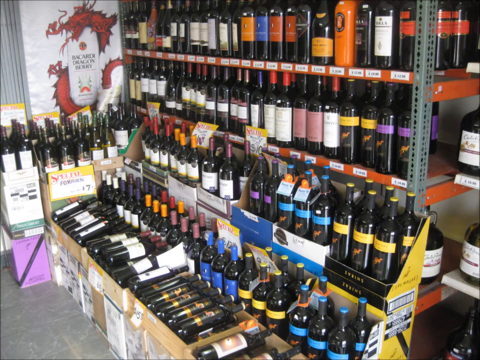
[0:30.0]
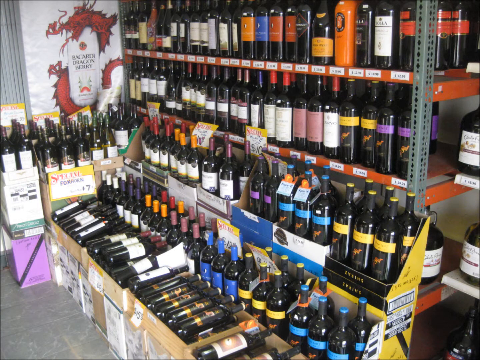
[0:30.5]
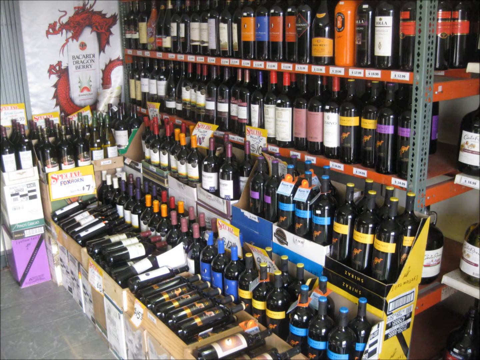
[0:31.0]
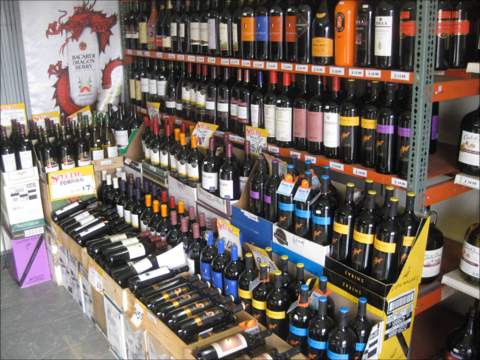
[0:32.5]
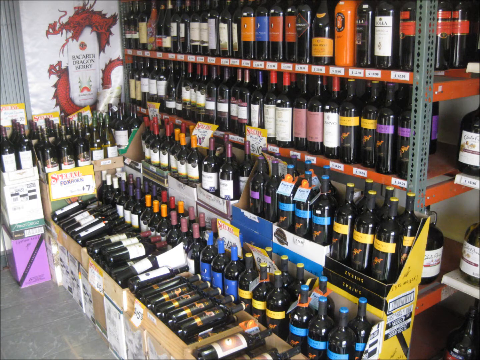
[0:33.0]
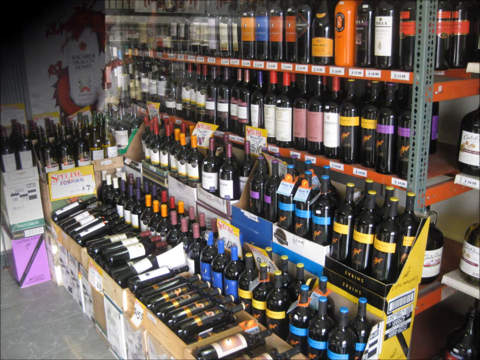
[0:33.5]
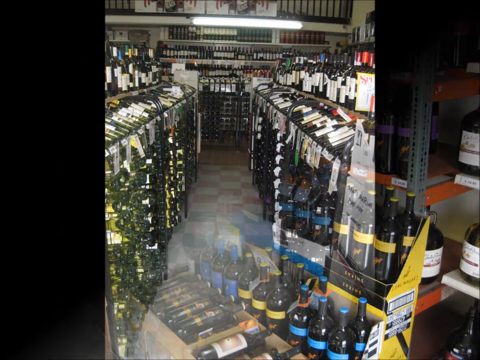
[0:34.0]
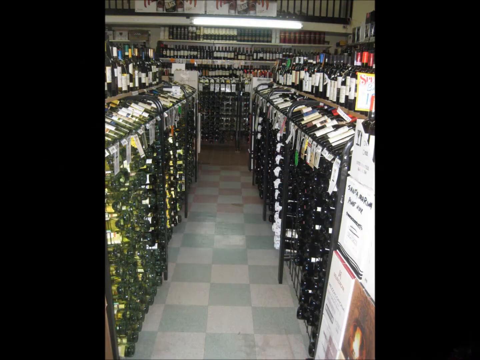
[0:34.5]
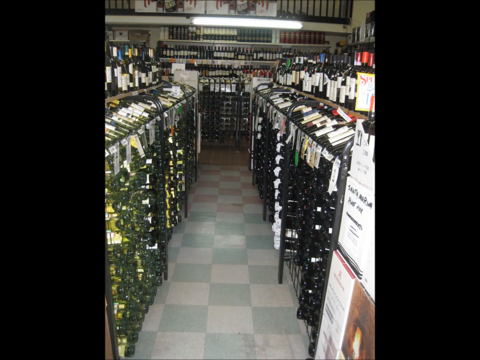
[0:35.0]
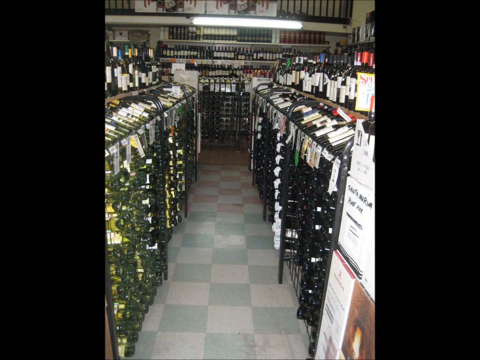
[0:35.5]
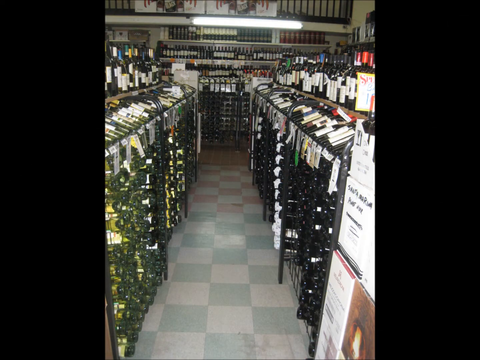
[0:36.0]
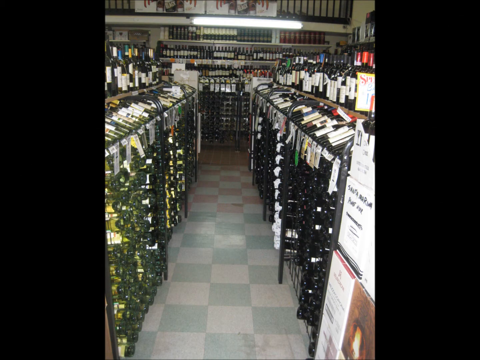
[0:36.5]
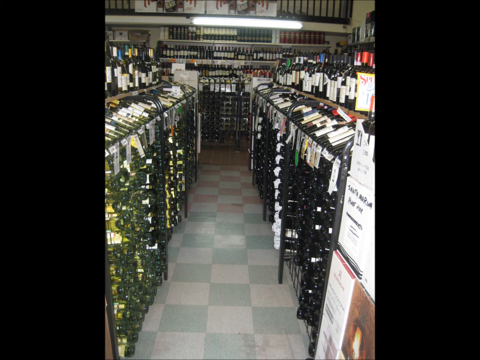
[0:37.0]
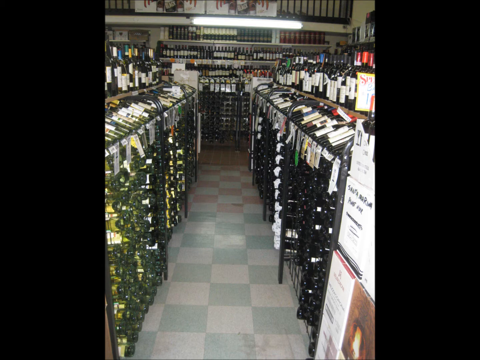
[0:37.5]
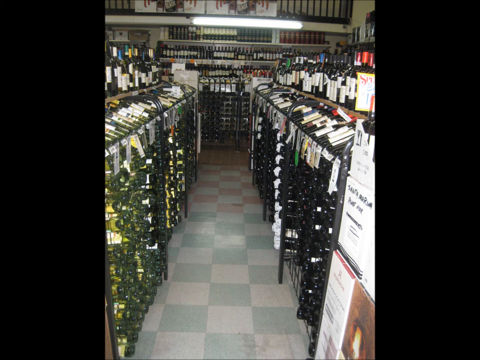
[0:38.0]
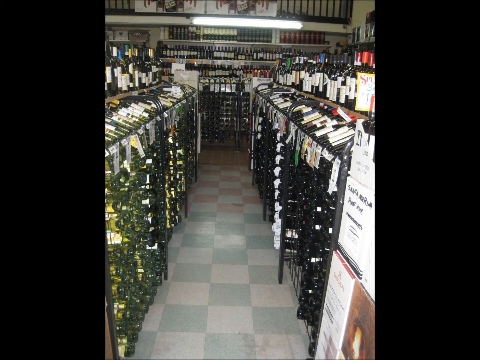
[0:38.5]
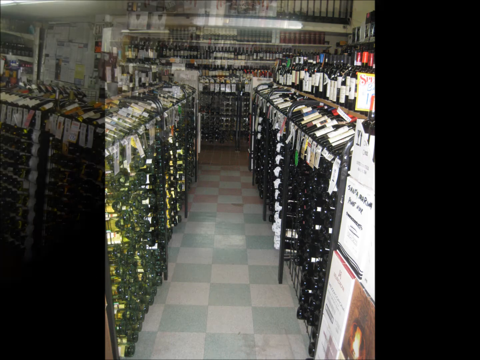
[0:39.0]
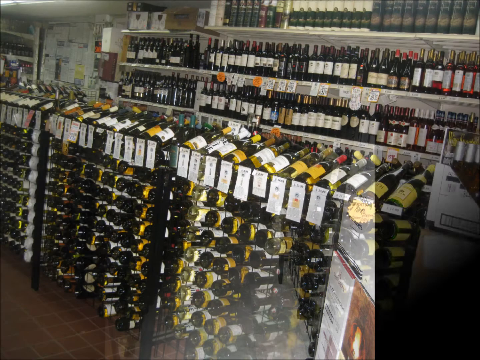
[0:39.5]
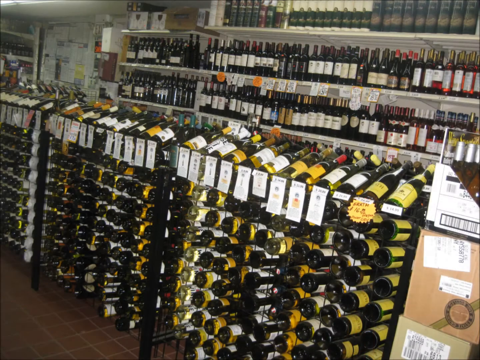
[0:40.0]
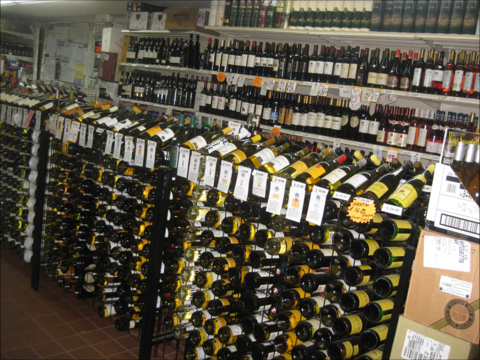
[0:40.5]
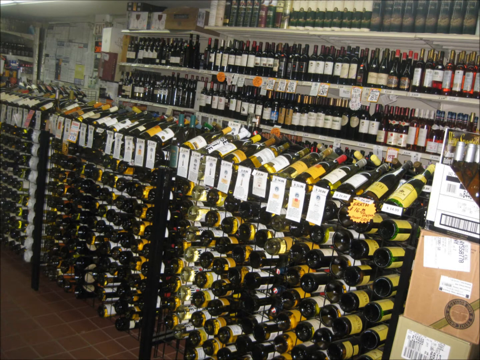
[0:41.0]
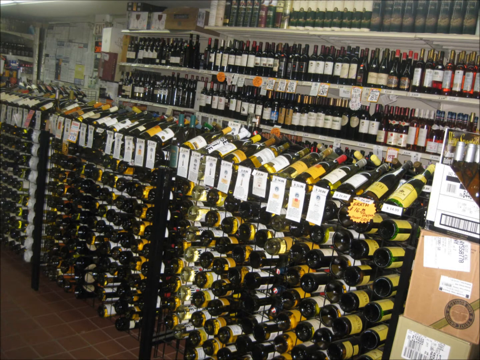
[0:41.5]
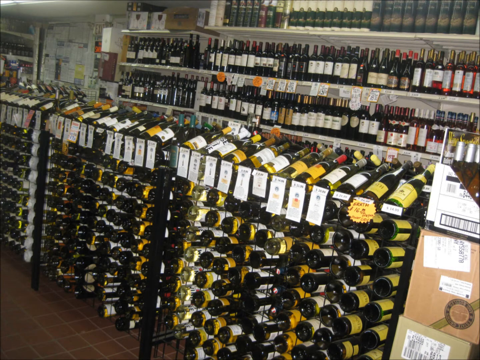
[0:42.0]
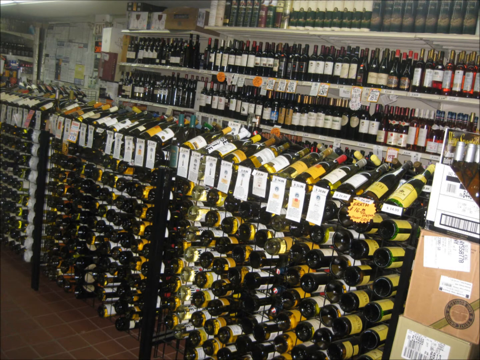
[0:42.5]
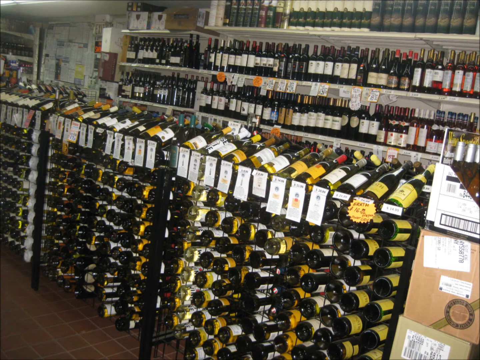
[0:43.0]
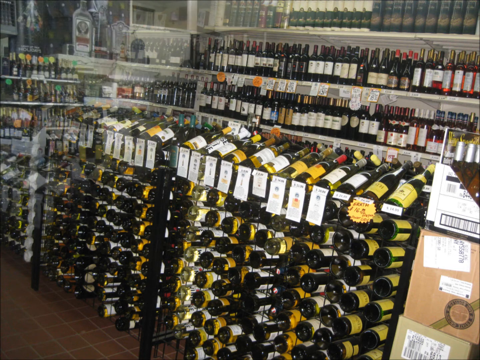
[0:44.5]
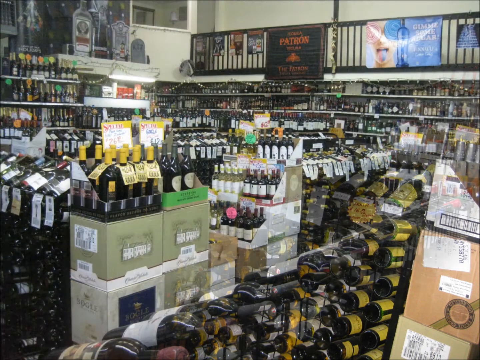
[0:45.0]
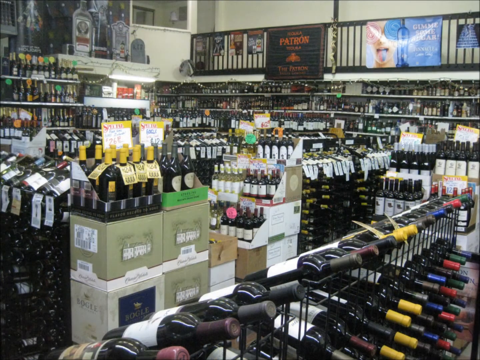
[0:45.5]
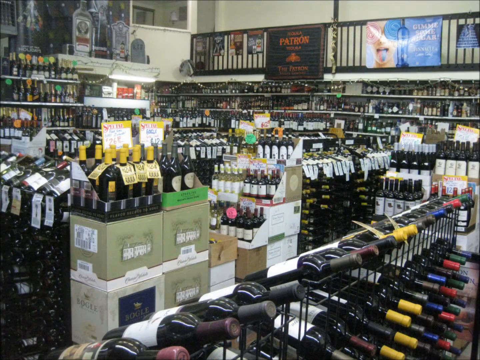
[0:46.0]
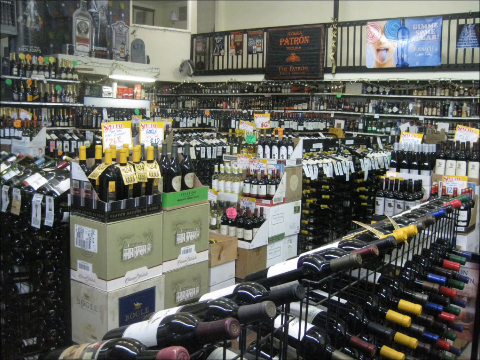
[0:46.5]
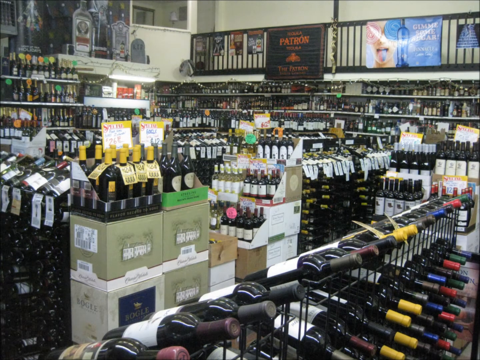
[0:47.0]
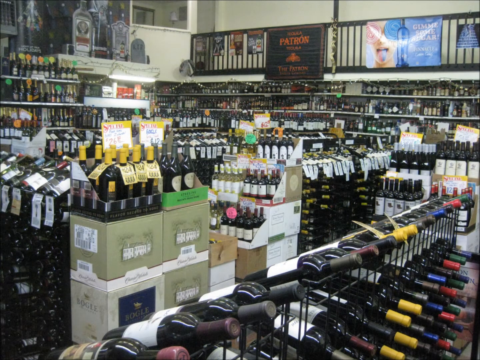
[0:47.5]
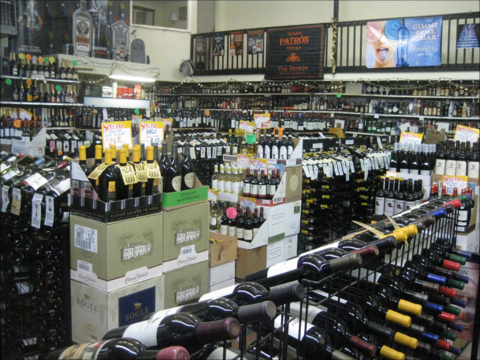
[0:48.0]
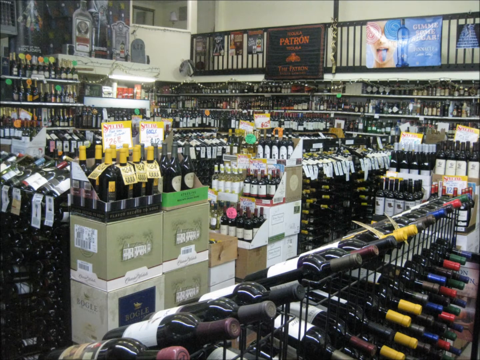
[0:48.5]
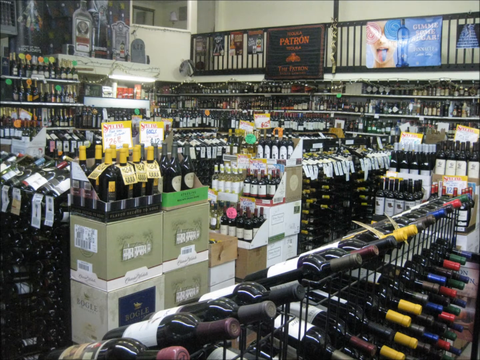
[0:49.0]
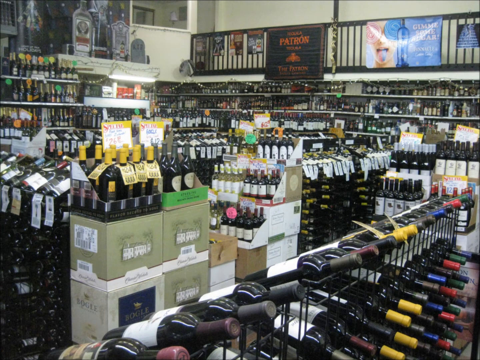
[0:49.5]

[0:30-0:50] Several rows on a shelf hold different lines of bottles. Some bottles are orange, and all of them are dark. Many appear to have similar logos, with a lot of them the same brand; some have a yellow strip across, some a light blue strip and some a purple strip. There are bottles in front of them. Another section, a different aisle, is full of wine bottles. More bottles follow, seemingly organized by color, including a bunch of yellow bottles of different brands. The view then moves to a different part of the store. The bottom side of the shelving is orange and the bars are gray.